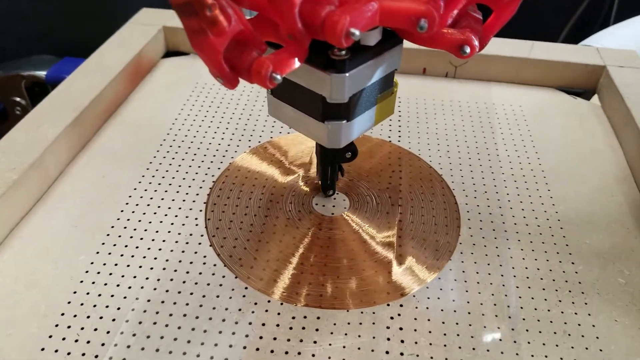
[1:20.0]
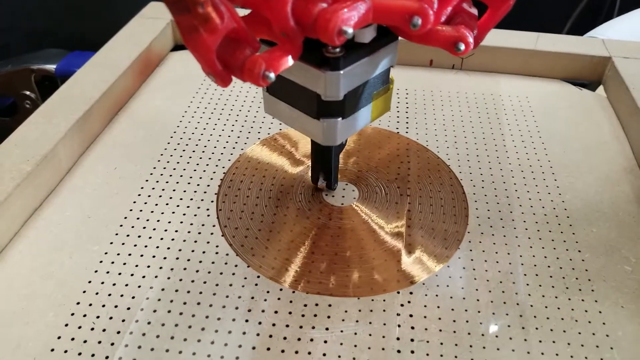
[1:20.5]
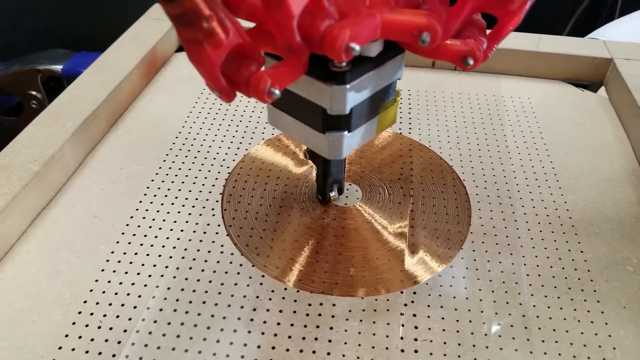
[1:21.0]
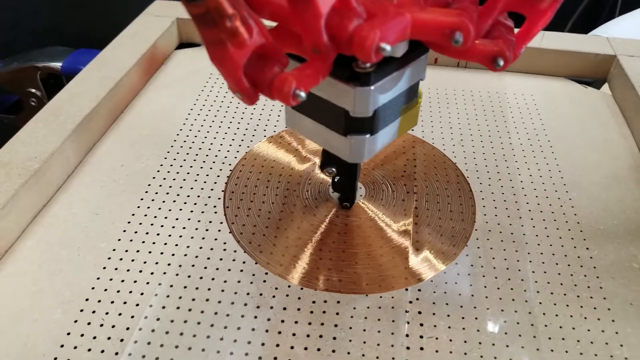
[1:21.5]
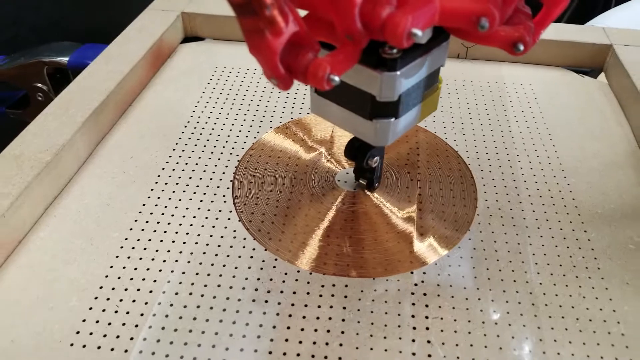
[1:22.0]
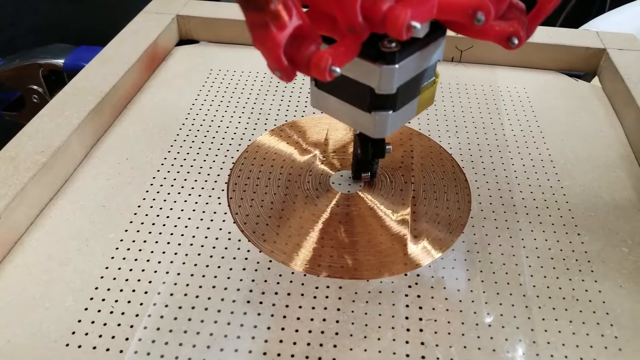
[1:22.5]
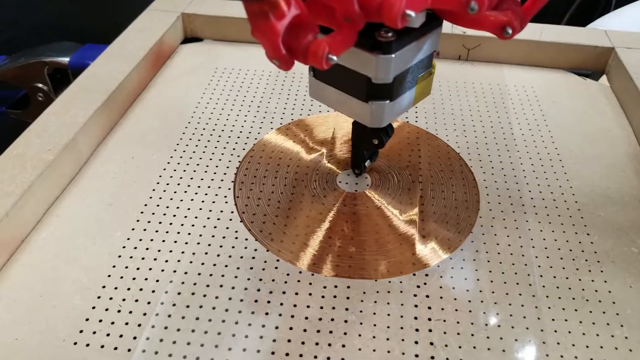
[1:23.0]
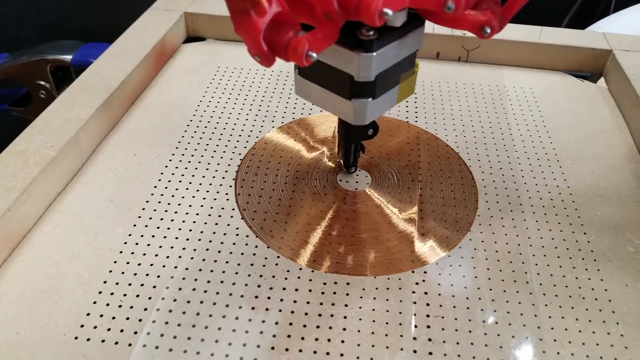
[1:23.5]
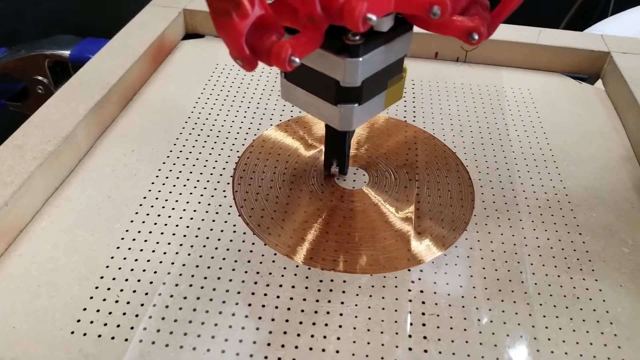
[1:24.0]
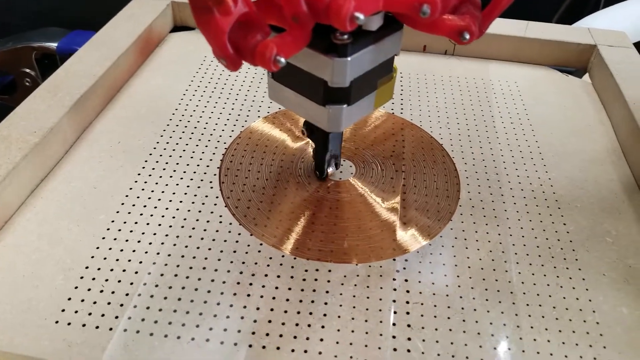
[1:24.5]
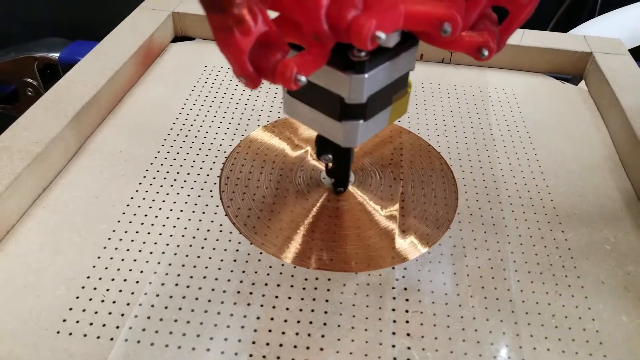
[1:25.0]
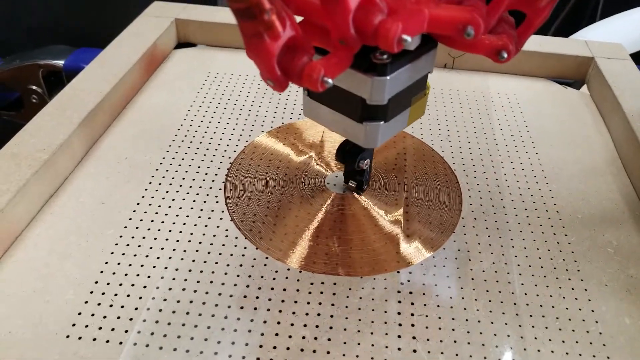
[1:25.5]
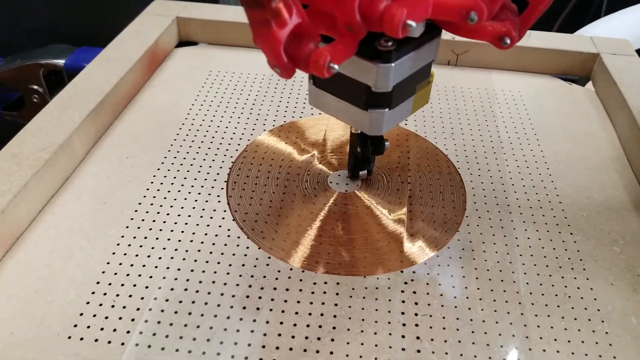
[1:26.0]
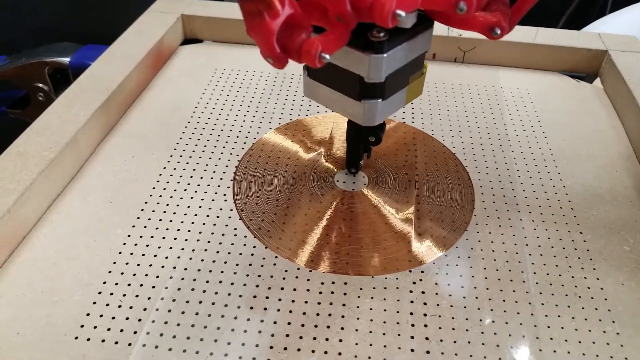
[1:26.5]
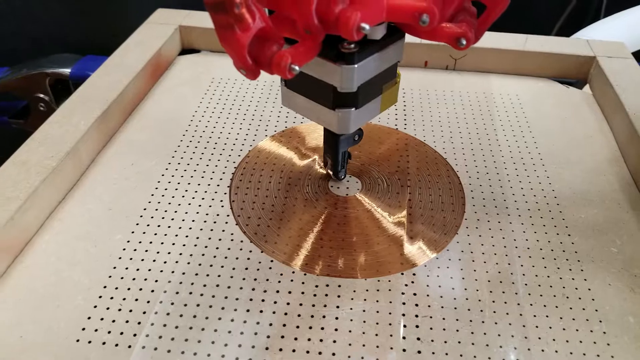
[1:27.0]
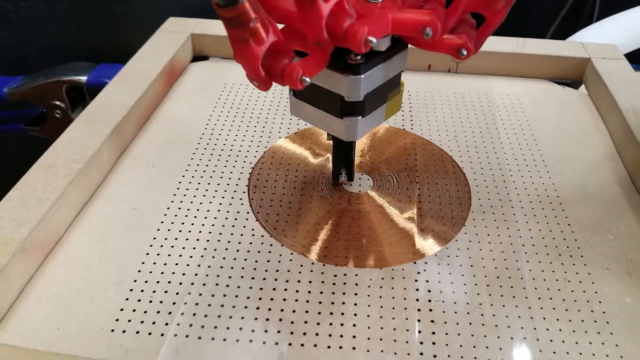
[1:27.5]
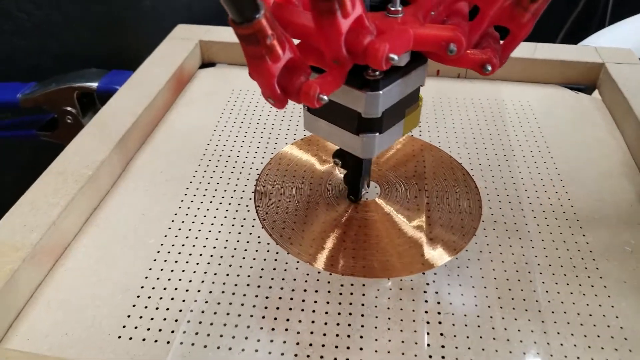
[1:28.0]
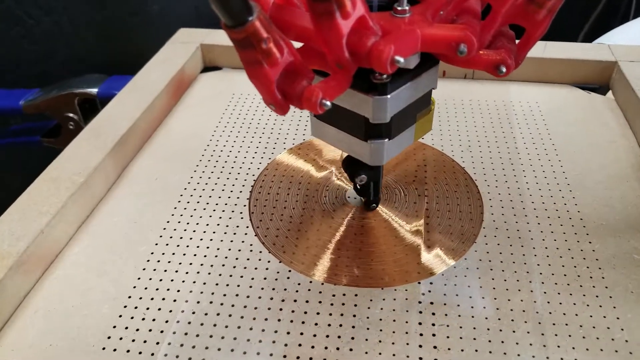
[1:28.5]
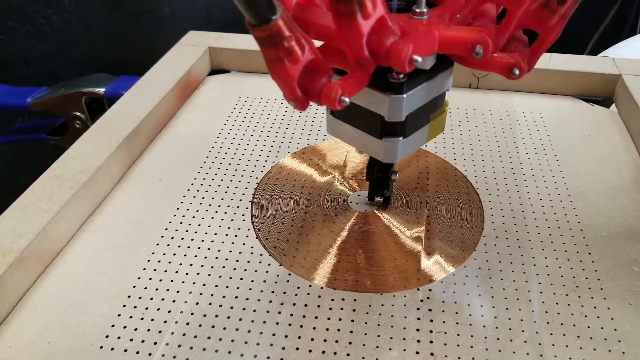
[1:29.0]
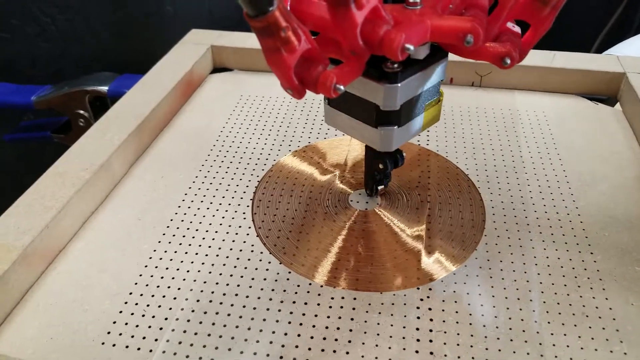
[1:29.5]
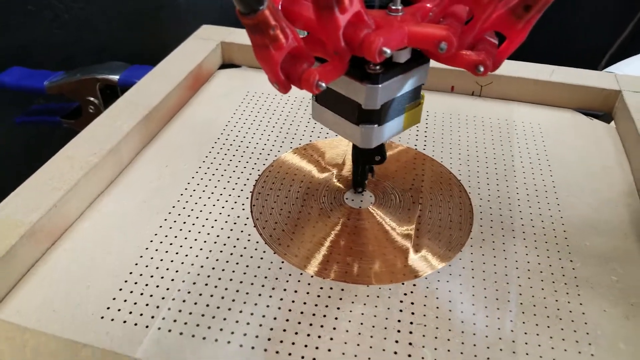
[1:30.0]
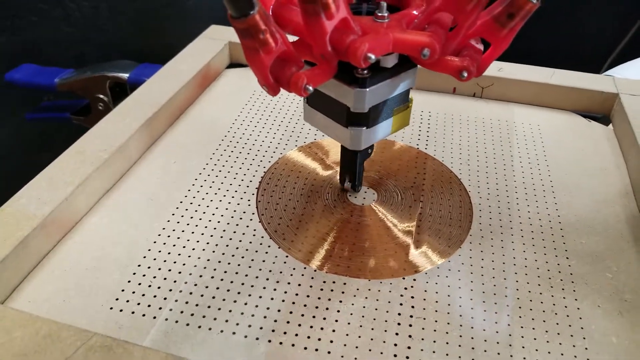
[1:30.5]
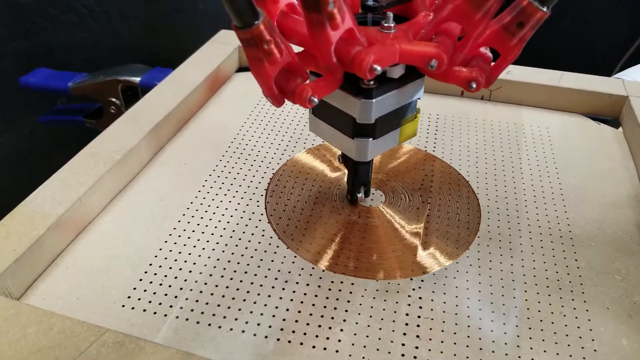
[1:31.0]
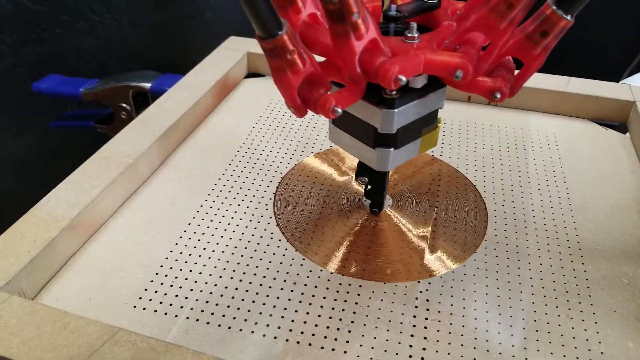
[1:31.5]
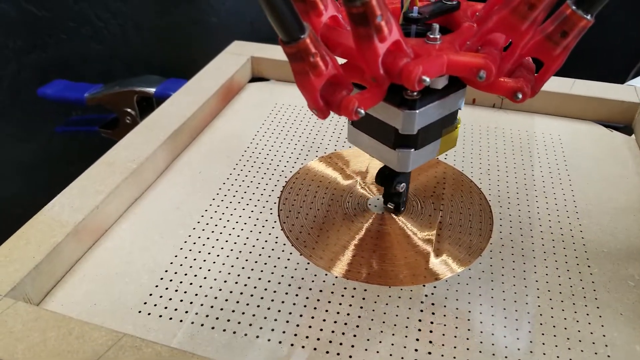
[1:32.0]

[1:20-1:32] A slow-motion aerial view shows the whole machine making circular motions on the gold part of the table, with a reflection visible on the gold part. The machine is fully visible, including the sides of the table, the red part of the machine, and its tip. The camera holds a fairly steady aerial view and does not really move beyond its original position, ending in the same position it started in, showing the entire machine.